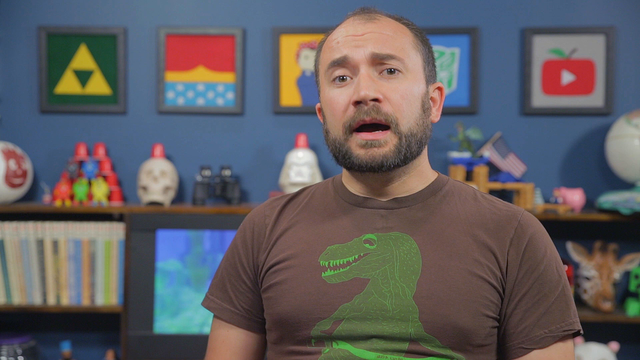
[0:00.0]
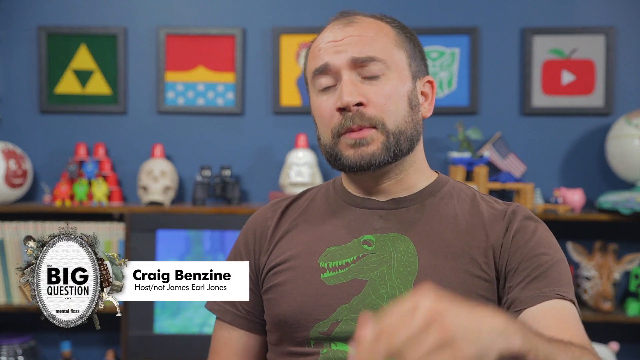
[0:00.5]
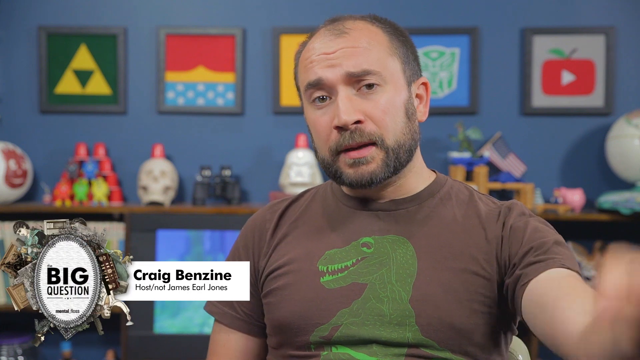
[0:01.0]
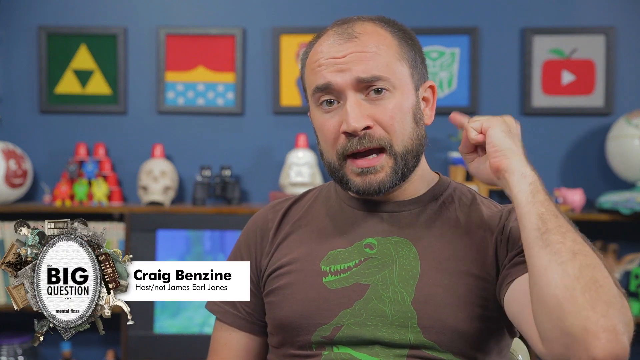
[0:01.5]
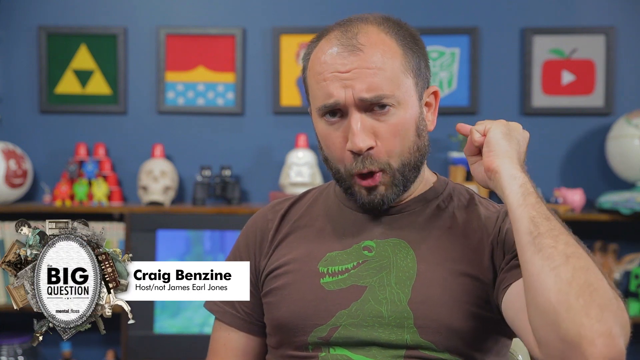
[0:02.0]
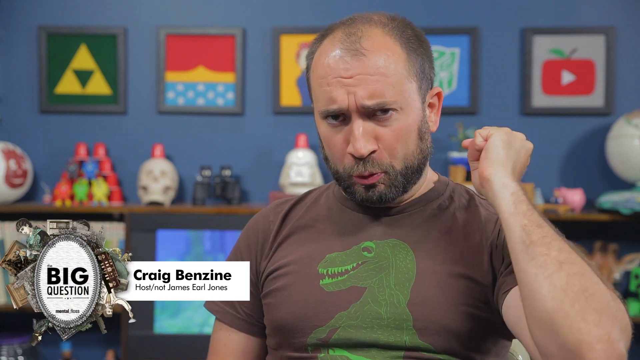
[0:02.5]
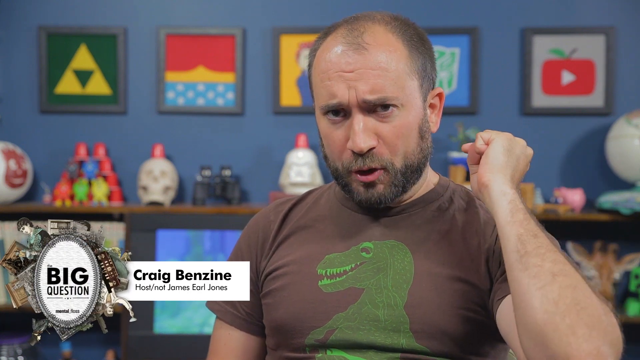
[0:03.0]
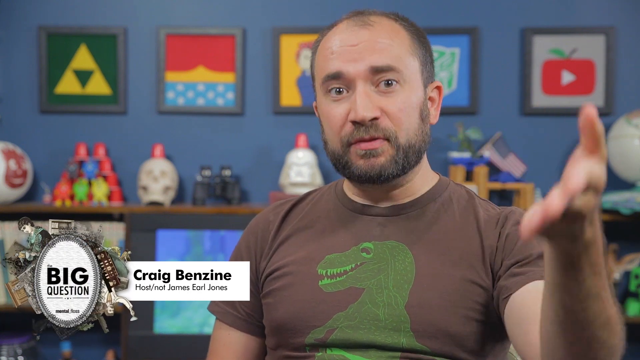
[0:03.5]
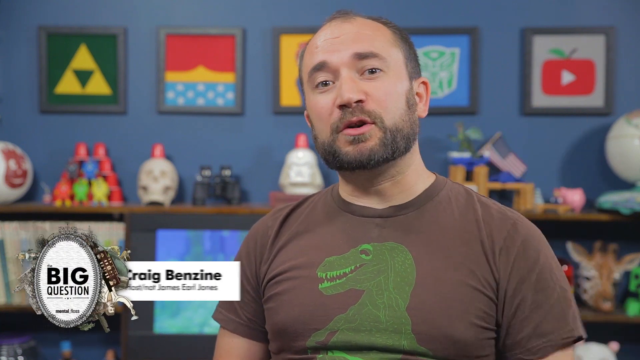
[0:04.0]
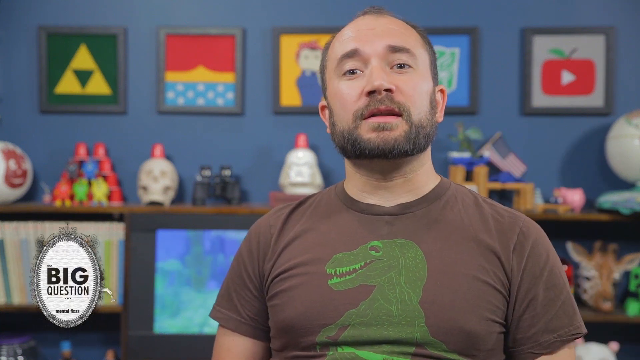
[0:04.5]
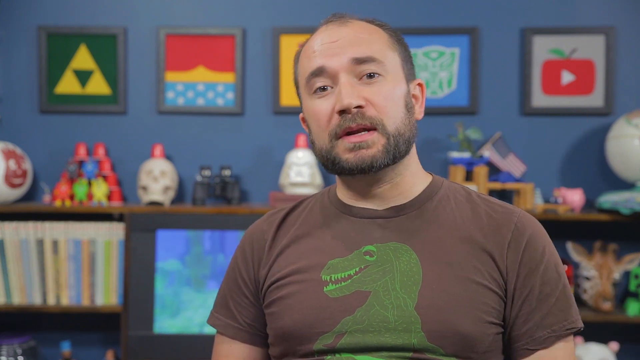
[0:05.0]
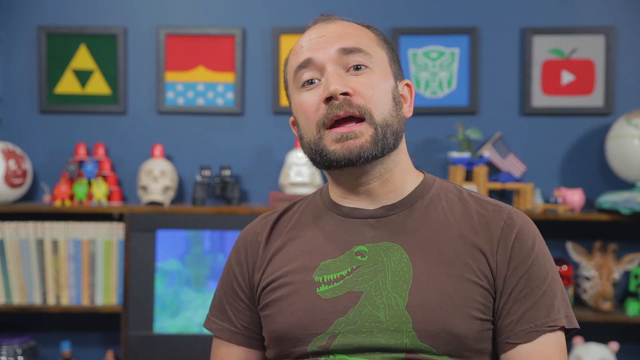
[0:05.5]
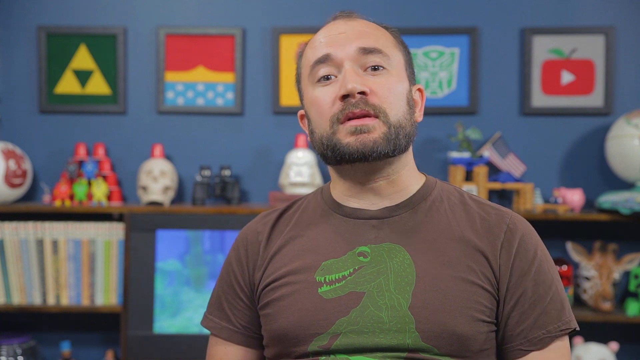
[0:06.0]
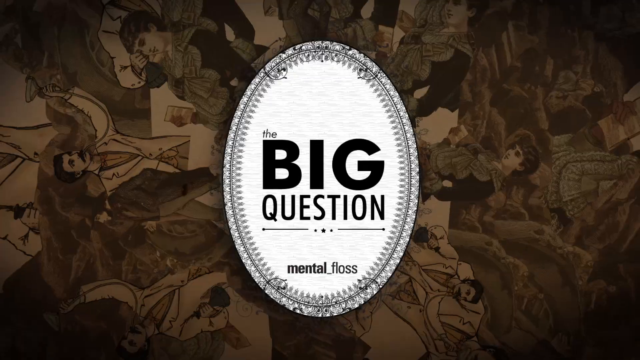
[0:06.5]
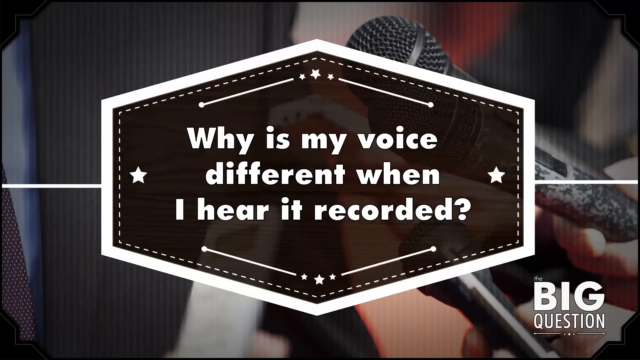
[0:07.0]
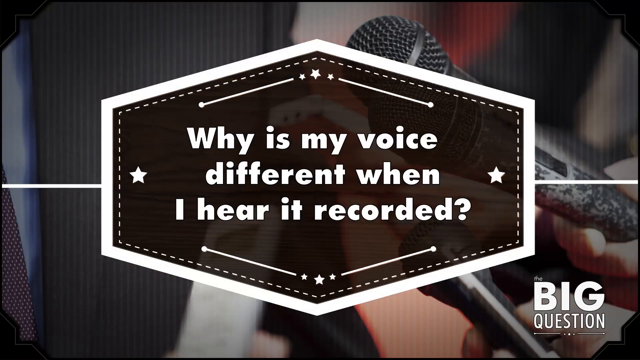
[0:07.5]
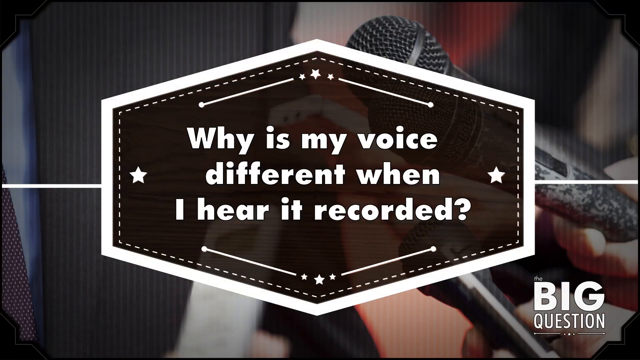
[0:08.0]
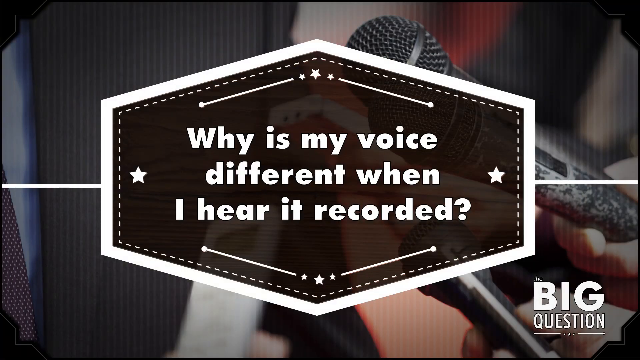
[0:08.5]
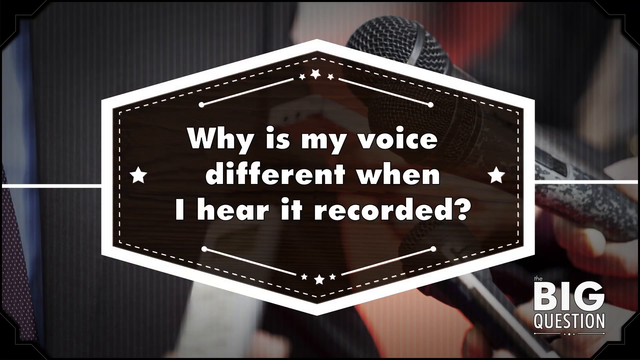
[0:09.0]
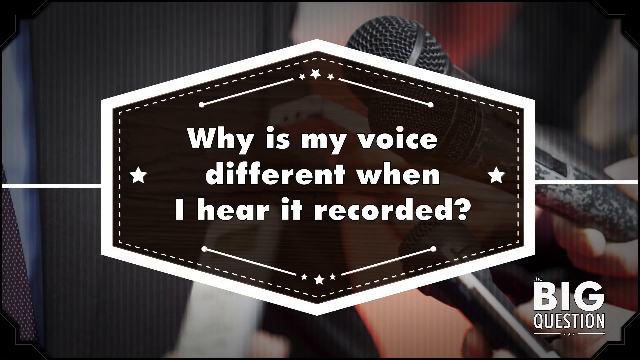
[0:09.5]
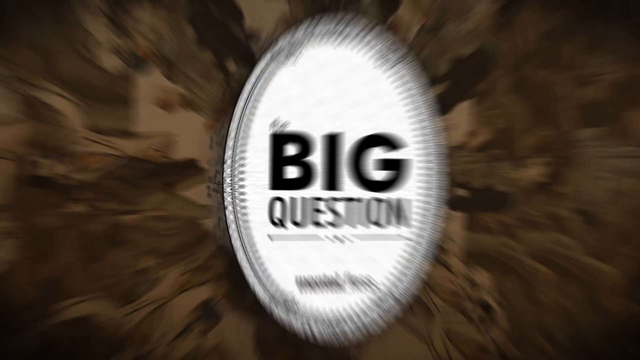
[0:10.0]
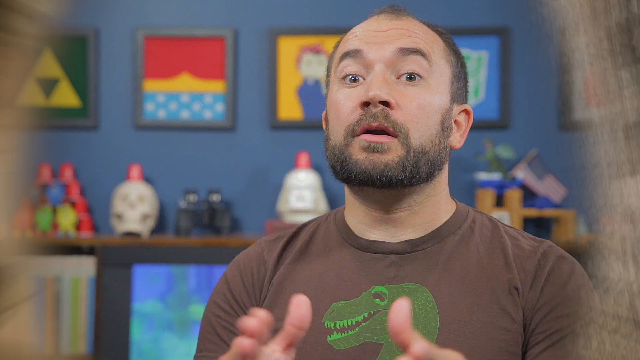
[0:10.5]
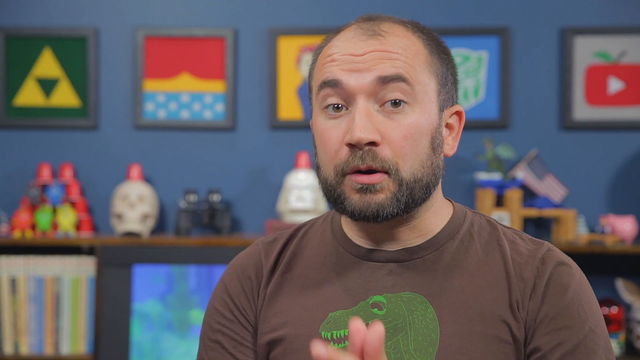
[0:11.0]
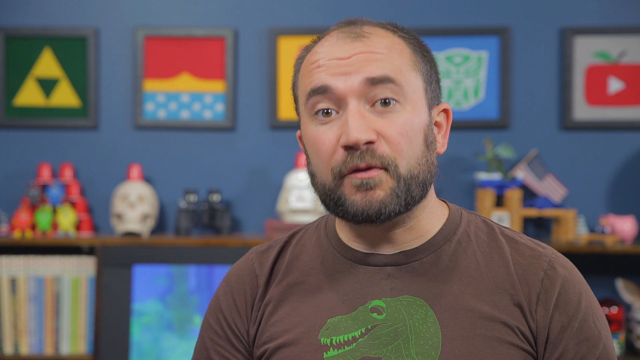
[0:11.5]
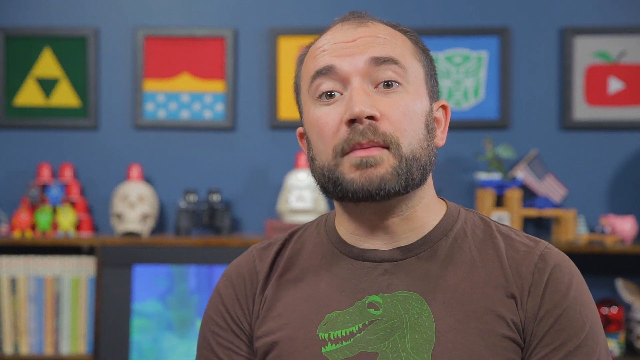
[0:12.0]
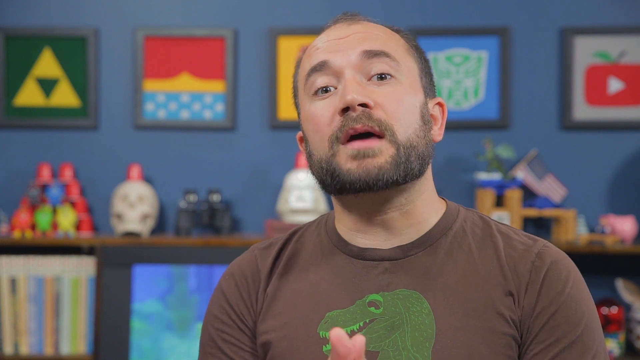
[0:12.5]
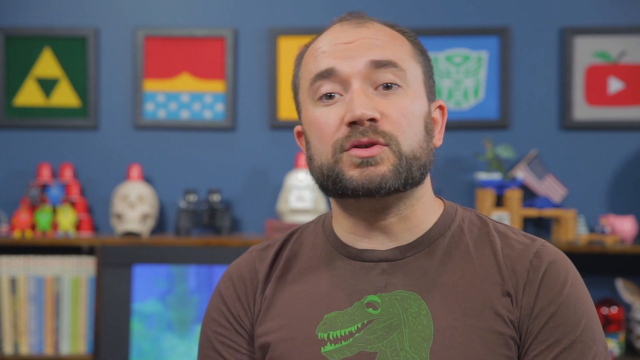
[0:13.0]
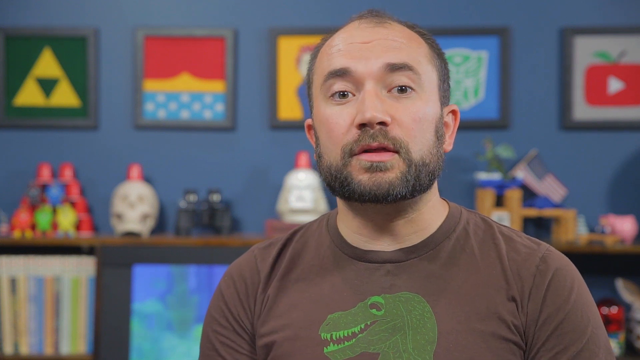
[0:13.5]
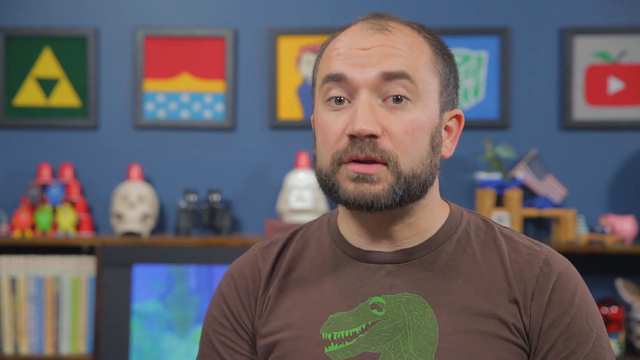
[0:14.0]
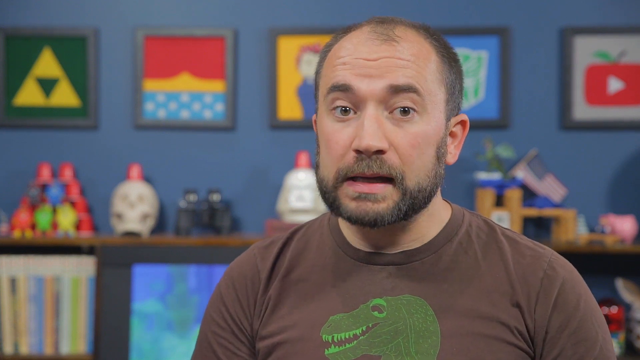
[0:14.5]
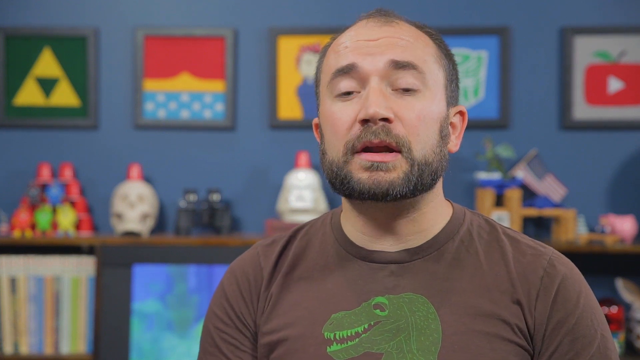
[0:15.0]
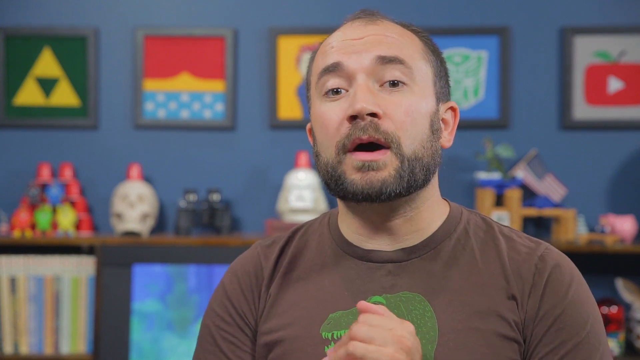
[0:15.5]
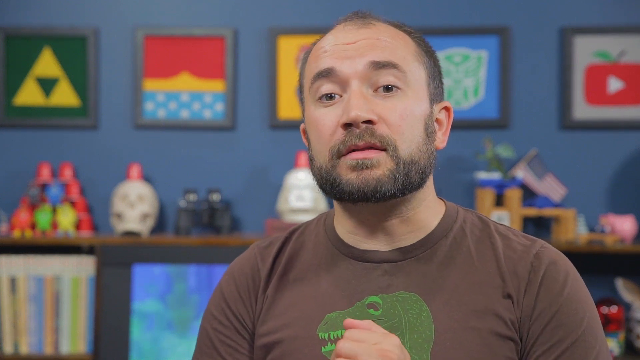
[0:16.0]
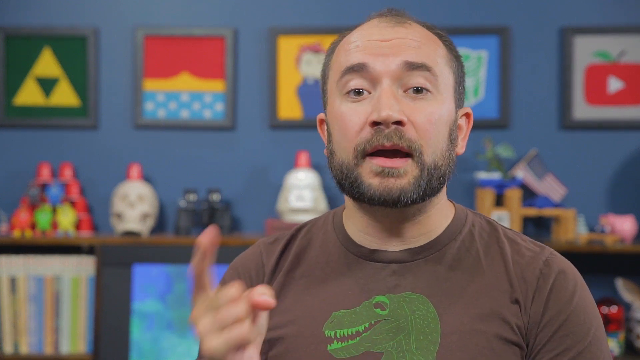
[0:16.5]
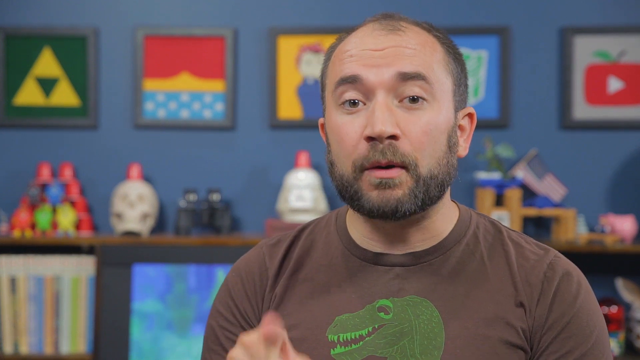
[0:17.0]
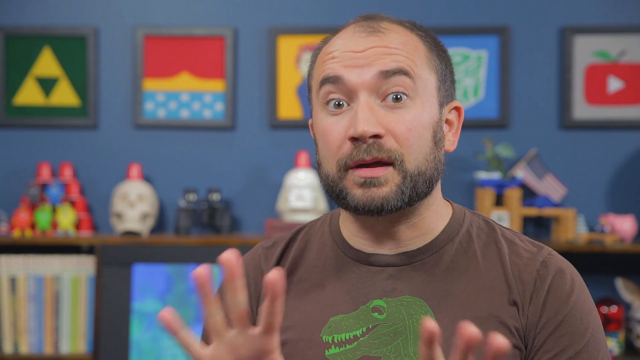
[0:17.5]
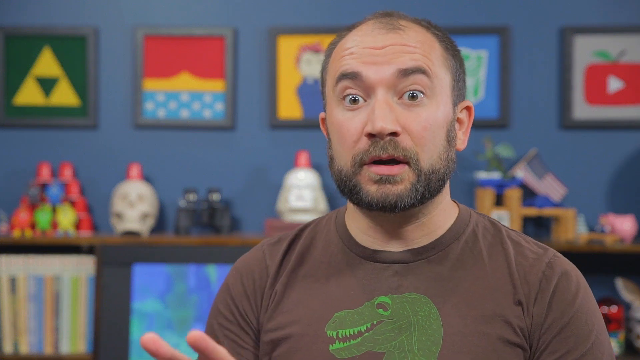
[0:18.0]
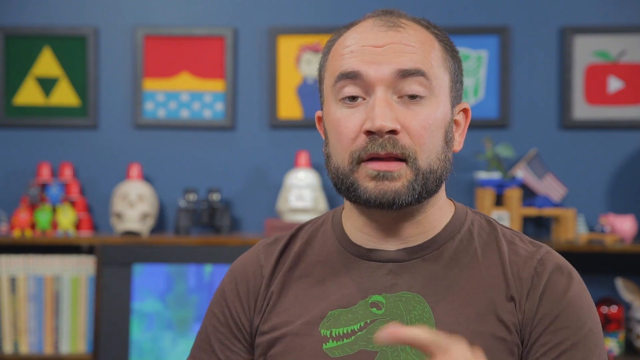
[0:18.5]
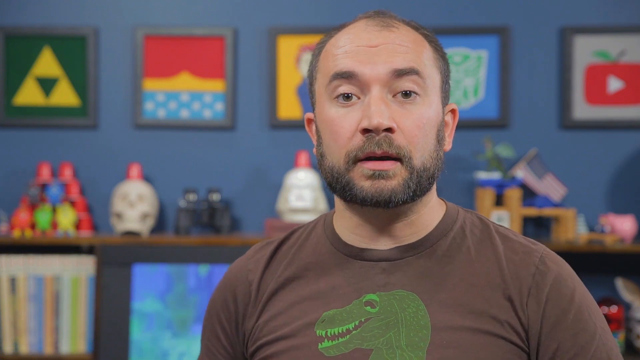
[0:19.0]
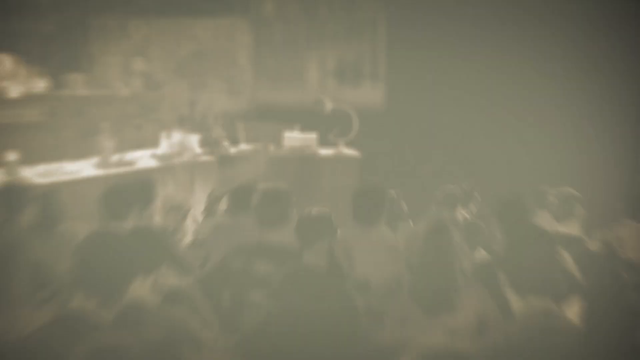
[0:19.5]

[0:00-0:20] A man looks at the camera, wearing a brown shirt with a green dinosaur on the front. A number of simple pictures hang on the wall in the background. In the bottom left of the screen, a small pop-up appears with the words "big question," the host's name, and a small graphic around it. The man gestures towards the back behind him and starts talking towards the camera. He disappears, and the text "big question" takes up most of the screen, surrounded by old-fashioned images of people. That gives way to a microphone background with text asking why someone's voice is different when they hear it recorded. The video switches back to the big question logo and then returns to the man as he talks towards the camera, making small gestures of emphasis with his hands and head. A pop-up book style image then shows a number of people in a crowd and a scientist holding something above their head.